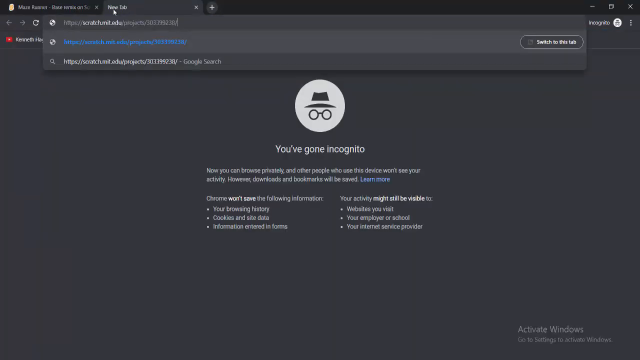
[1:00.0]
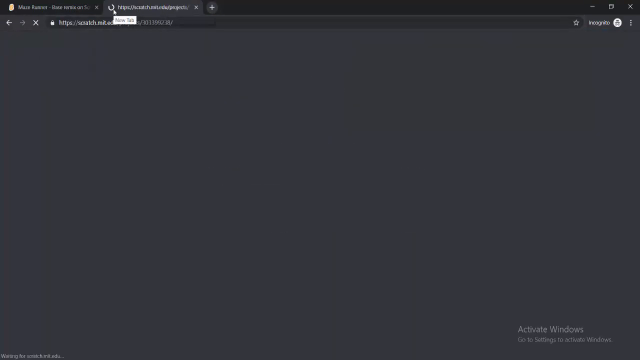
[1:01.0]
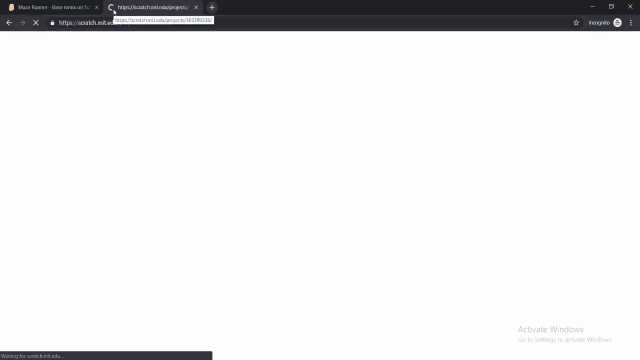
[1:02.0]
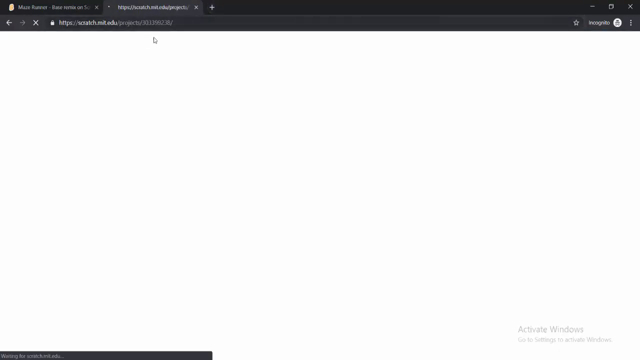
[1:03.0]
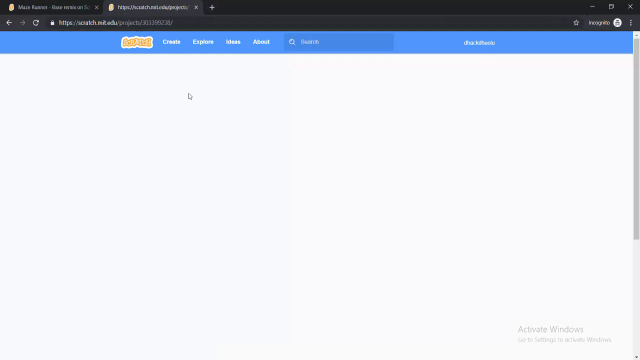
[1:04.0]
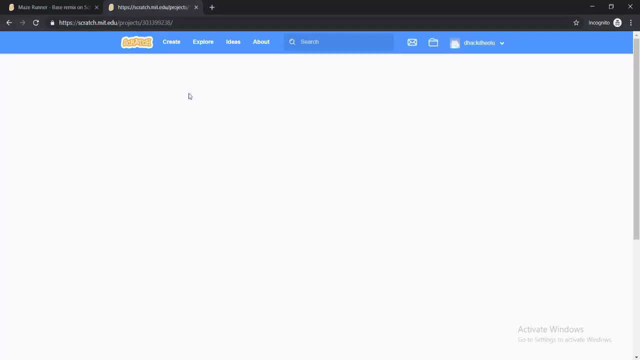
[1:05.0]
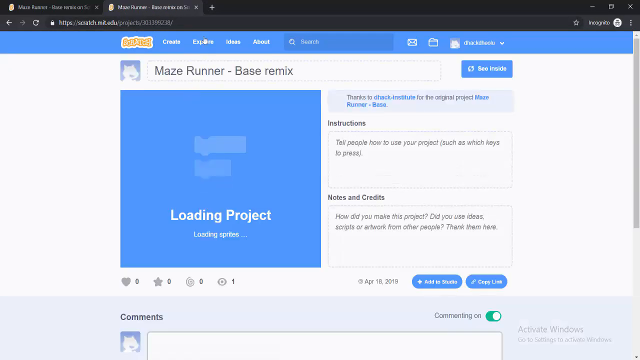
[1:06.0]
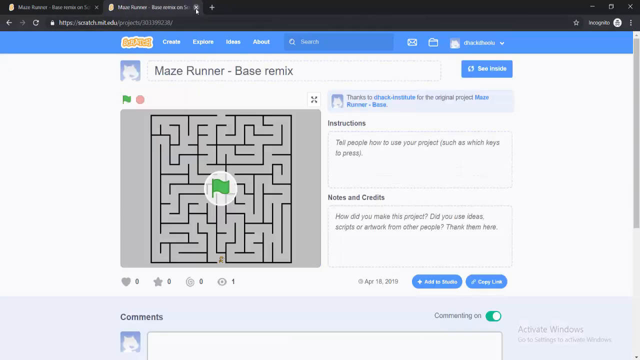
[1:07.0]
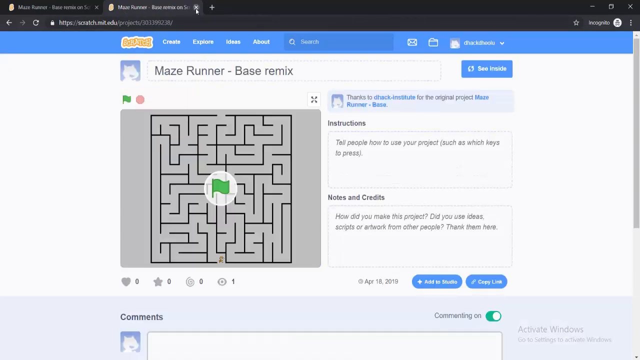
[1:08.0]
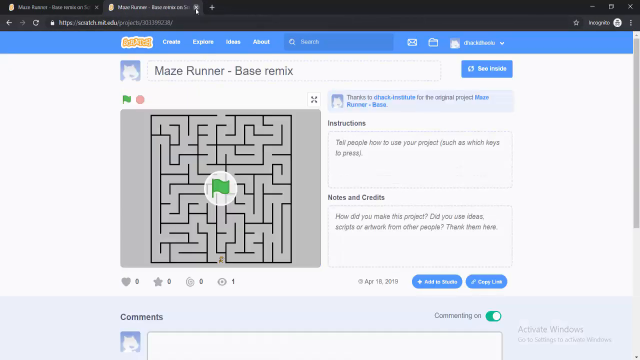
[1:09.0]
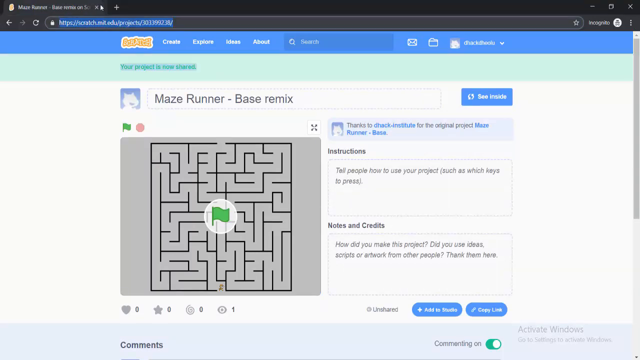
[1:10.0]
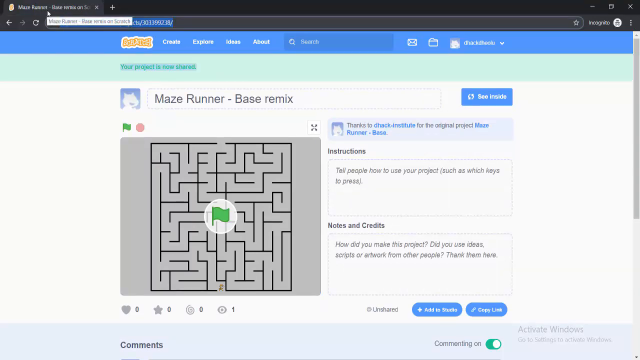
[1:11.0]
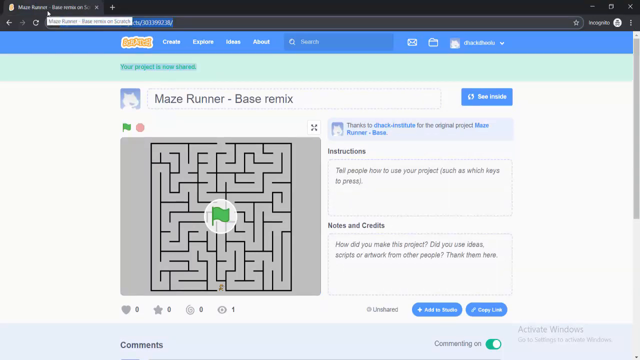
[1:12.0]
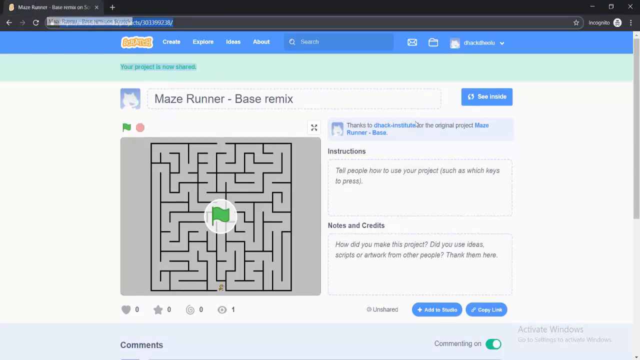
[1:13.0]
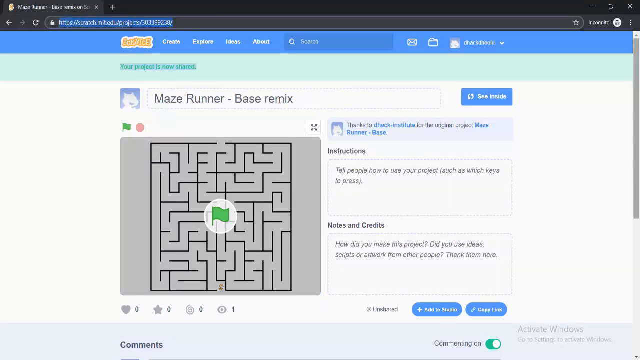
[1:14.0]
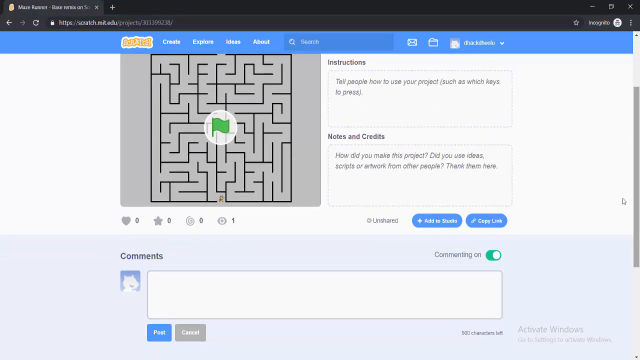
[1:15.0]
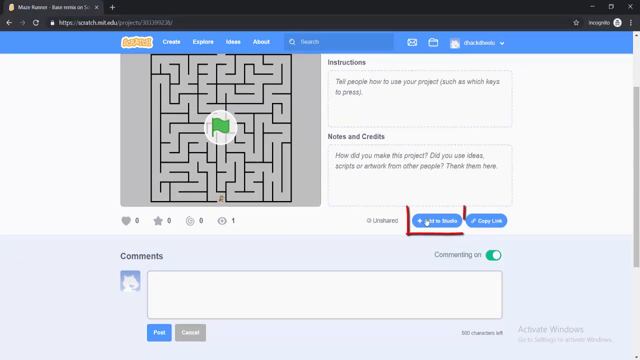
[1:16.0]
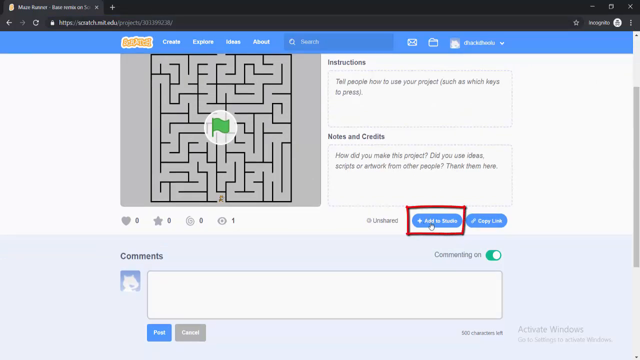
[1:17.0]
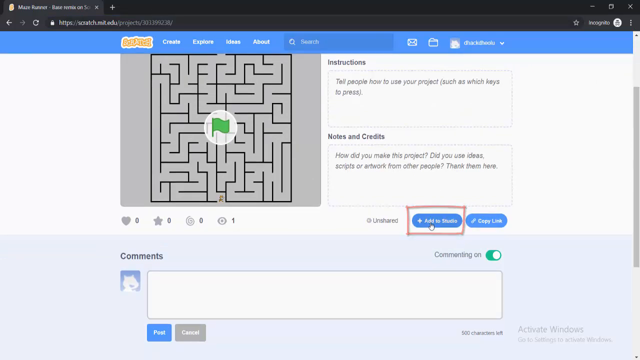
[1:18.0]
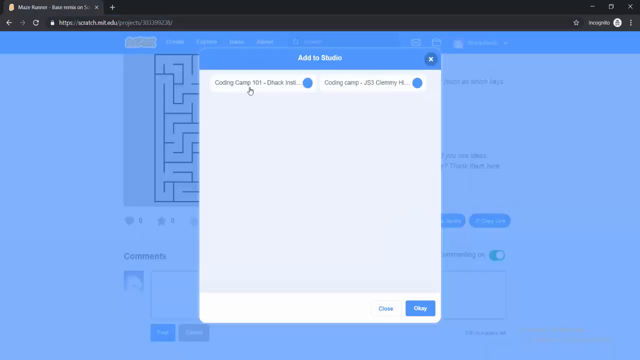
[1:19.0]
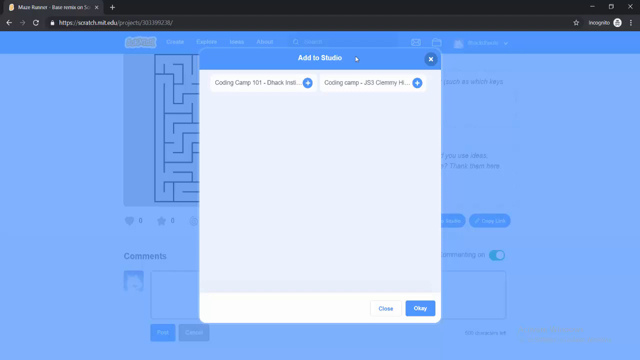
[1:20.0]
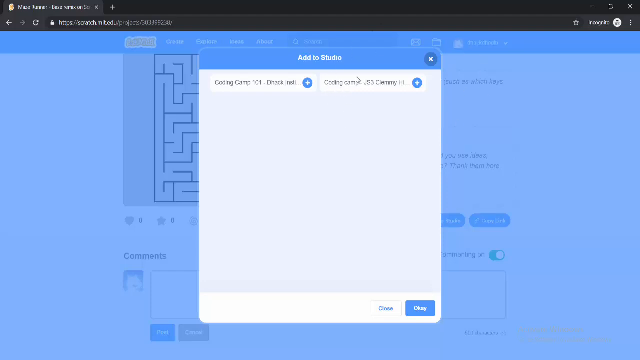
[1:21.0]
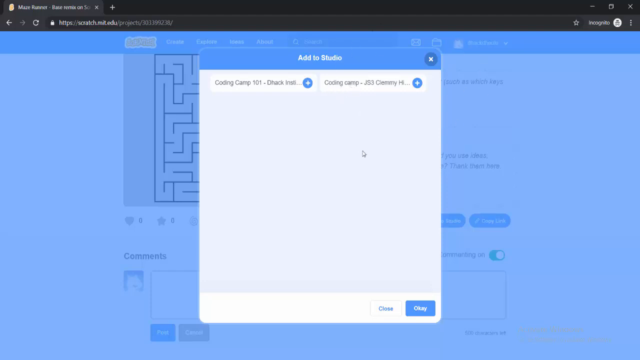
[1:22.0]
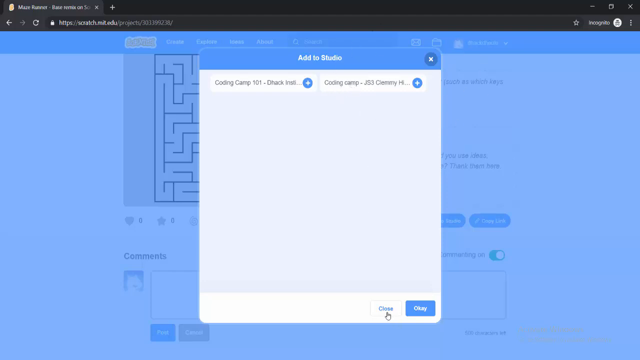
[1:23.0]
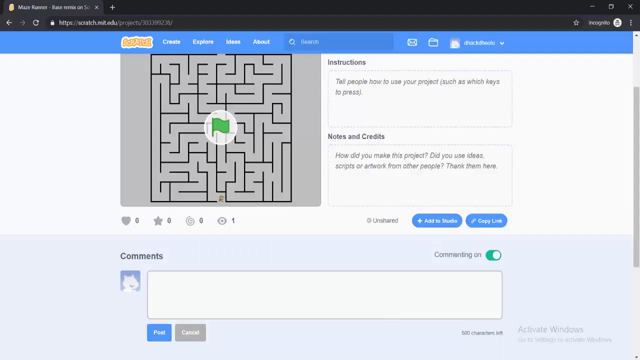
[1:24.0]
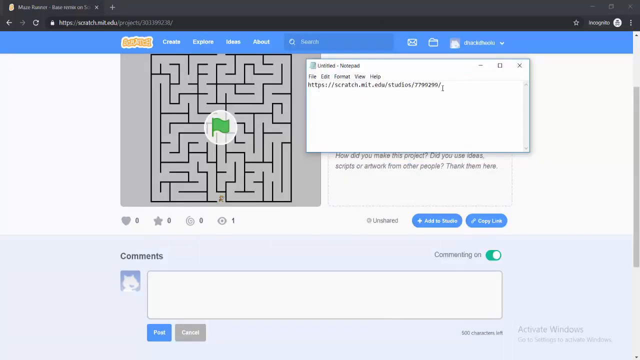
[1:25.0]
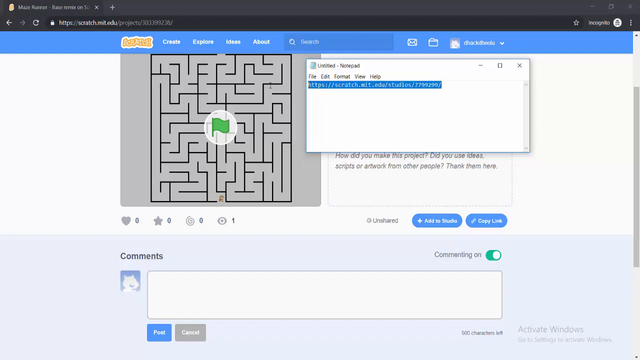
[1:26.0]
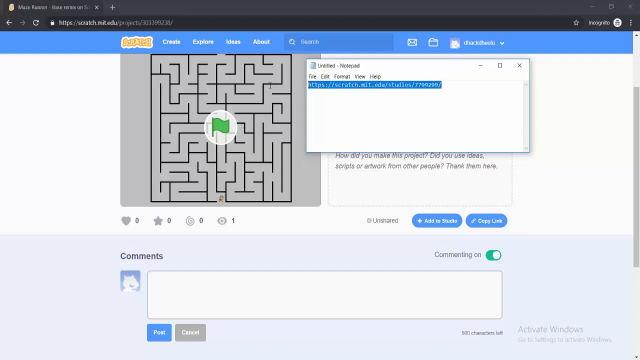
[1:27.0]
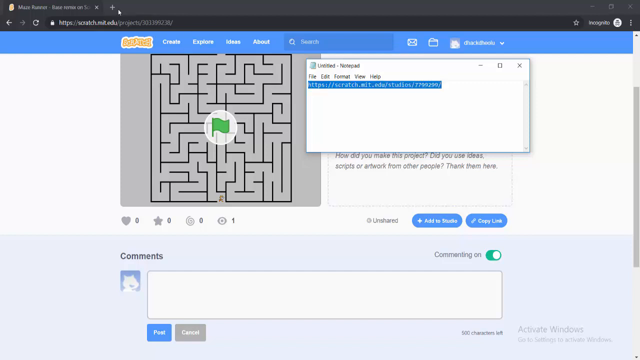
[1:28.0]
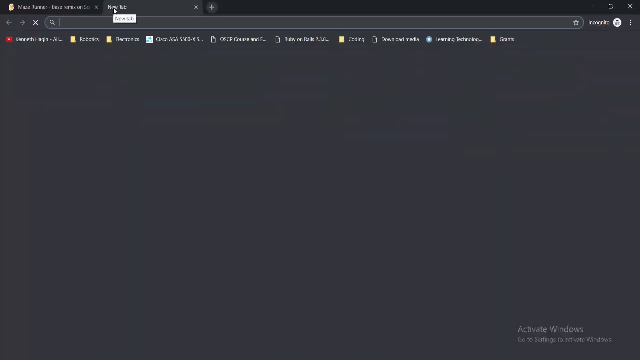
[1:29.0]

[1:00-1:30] The new tab shows the default incognito tab template. He clicks on the empty search bar and enters the URL of his Scratch project at scratch.mit.edu. The website begins to load, first as a white screen, then with the Scratch panel appearing at the top, and then his Maze Runner project appearing in the main portion of the screen, loading in a square box in the middle. Once it finishes loading, it shows a thumbnail of a simple maze with a green flag over it, and to the right are instructions and notes and credits. He closes this tab, returning to the original tab, which shows the same thing, and scrolls down, revealing the comments section of the website. A red box appears over the Add to Studio button, and his mouse hovers over it. He clicks it, revealing the Add to Studio menu, which is empty except for two buttons with a plus sign that say "Coding Camp 101" and "Coding Camp J53". He moves his mouse in circular motions over it. He then clicks the Close button at the bottom right of the screen. A notepad then appears over the original Scratch website, and in this untitled notepad he enters the URL of his project. He selects that text, creates a new incognito tab, pastes the link into the search bar, and it loads his project again.